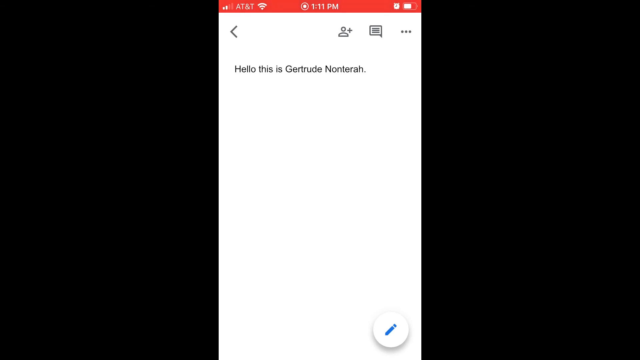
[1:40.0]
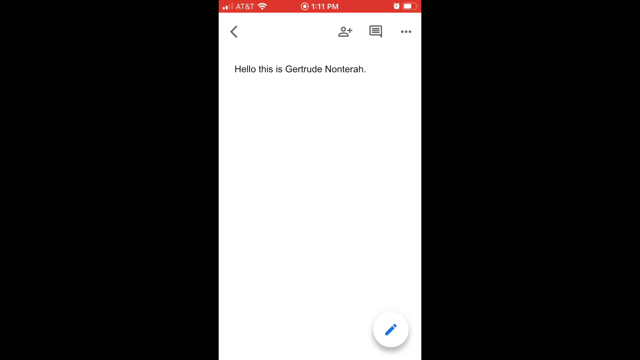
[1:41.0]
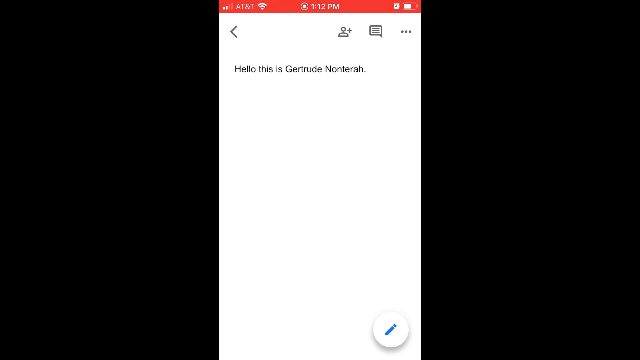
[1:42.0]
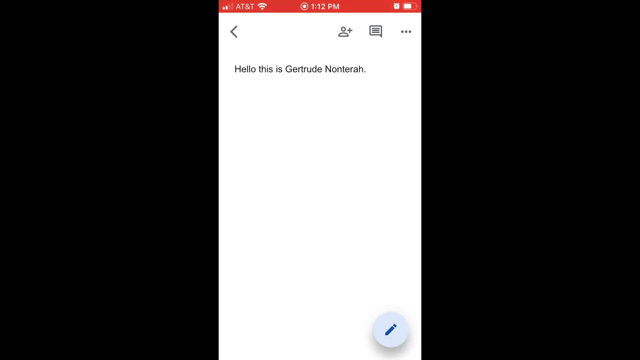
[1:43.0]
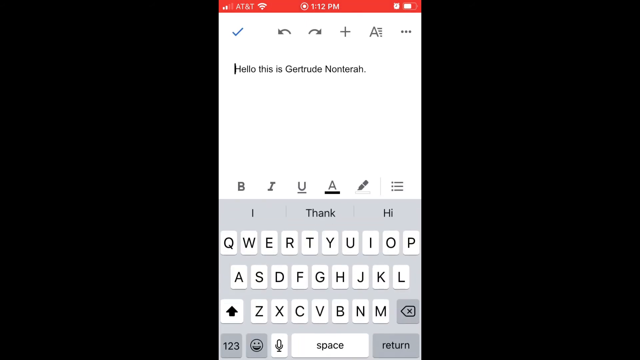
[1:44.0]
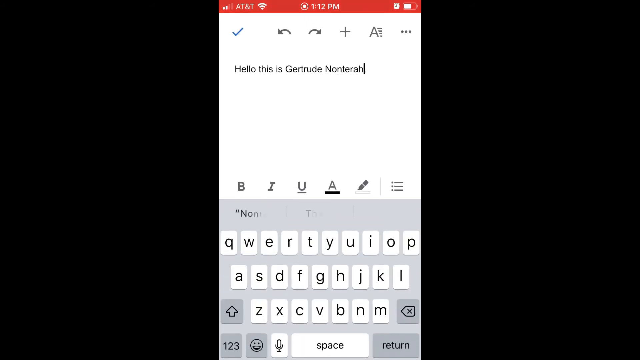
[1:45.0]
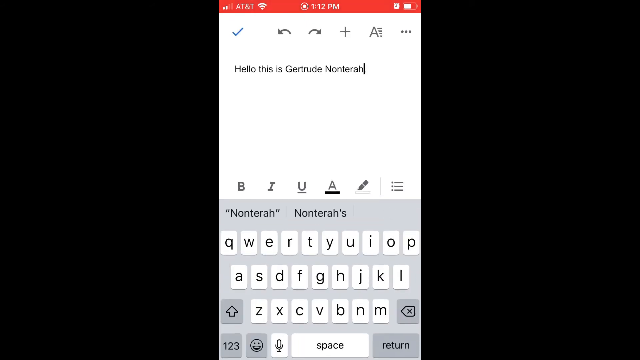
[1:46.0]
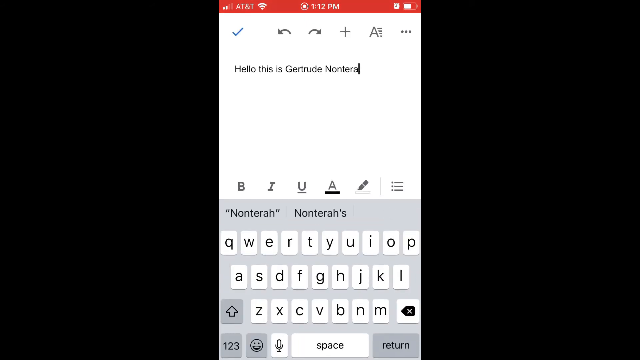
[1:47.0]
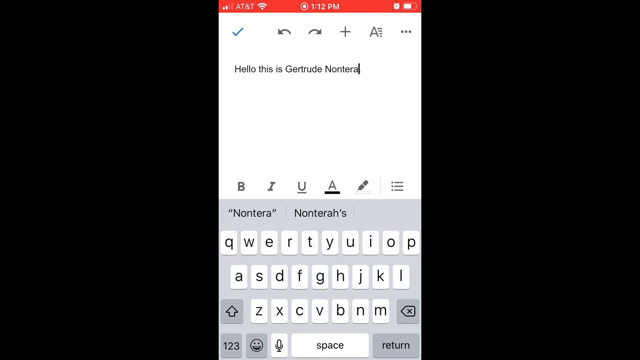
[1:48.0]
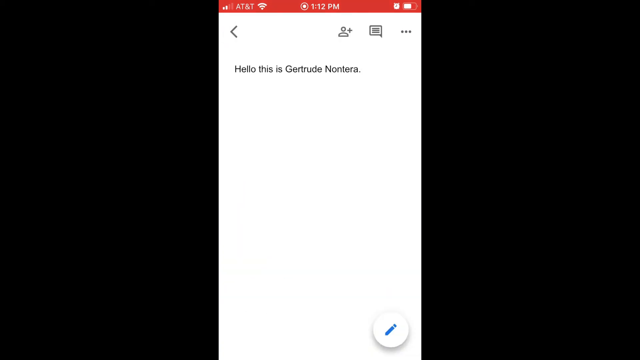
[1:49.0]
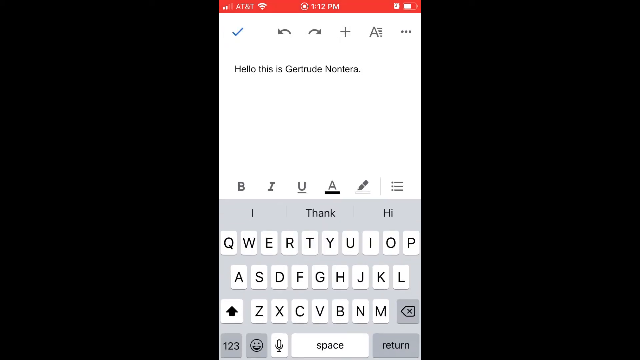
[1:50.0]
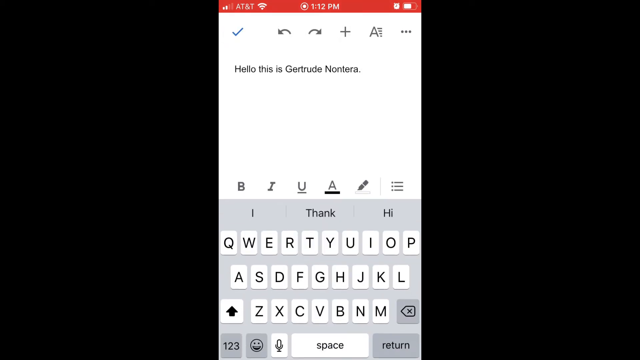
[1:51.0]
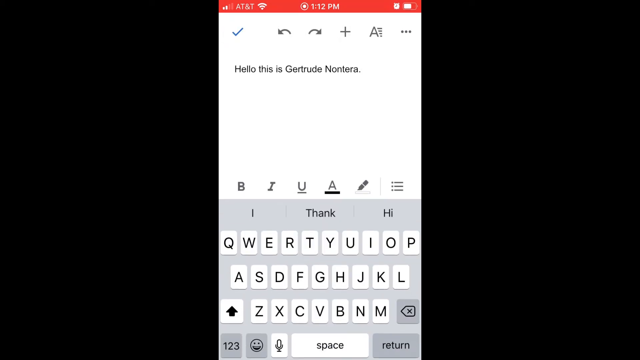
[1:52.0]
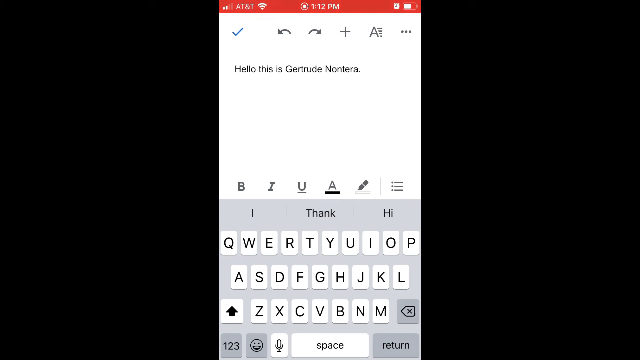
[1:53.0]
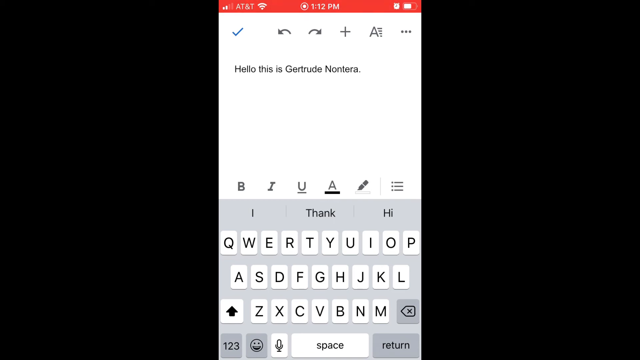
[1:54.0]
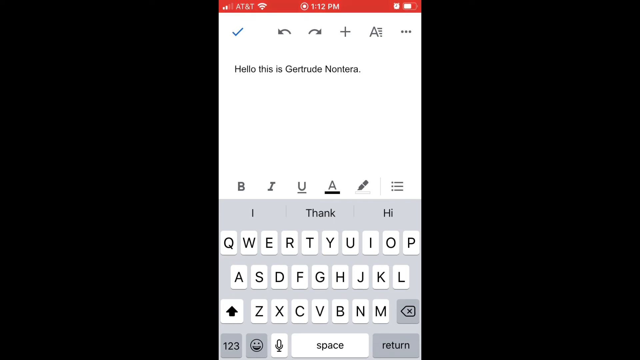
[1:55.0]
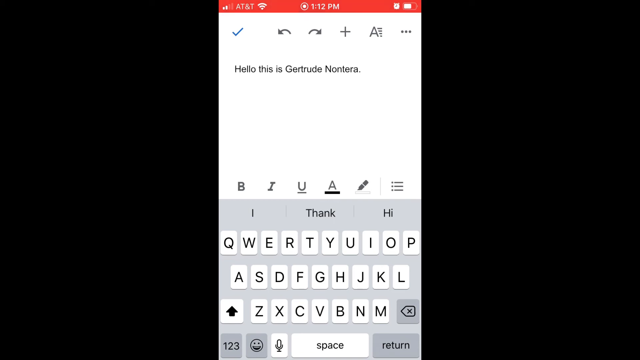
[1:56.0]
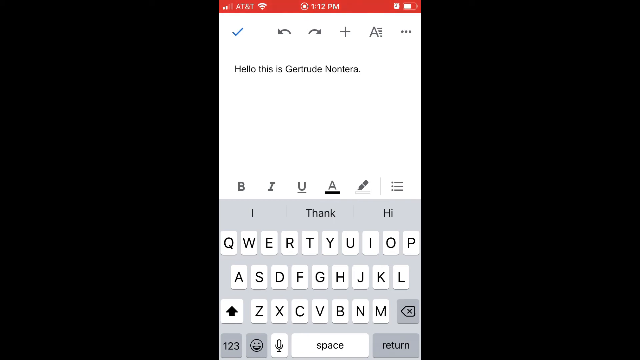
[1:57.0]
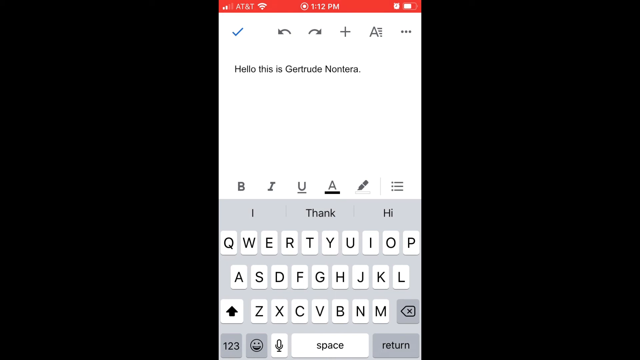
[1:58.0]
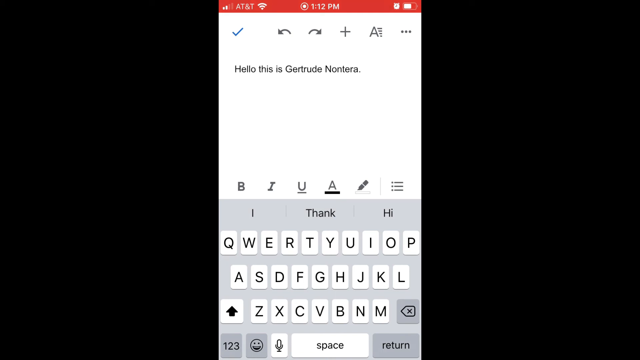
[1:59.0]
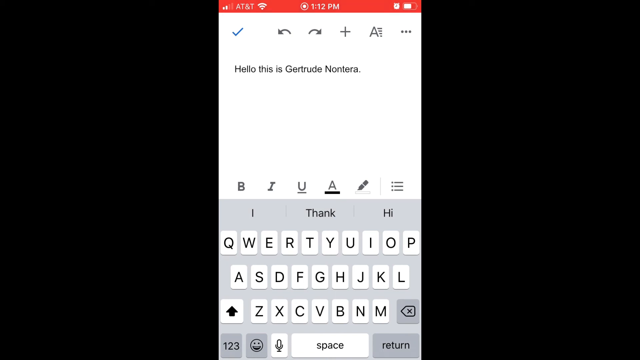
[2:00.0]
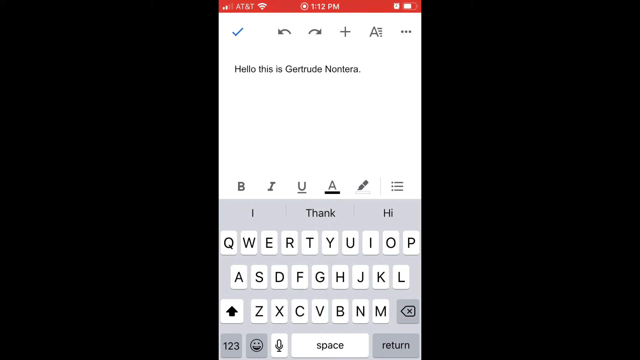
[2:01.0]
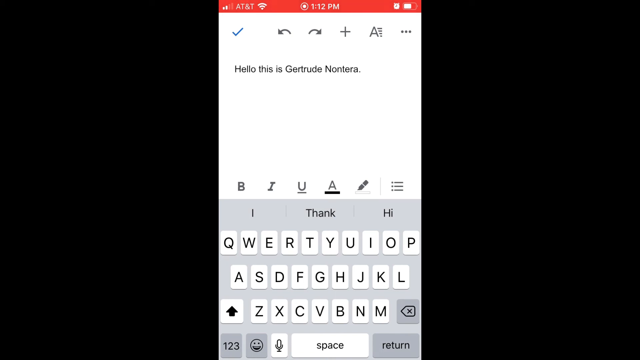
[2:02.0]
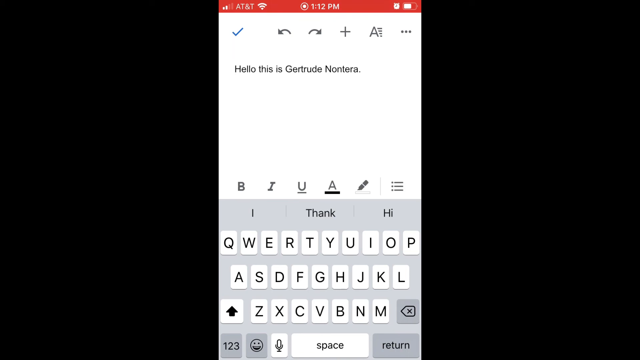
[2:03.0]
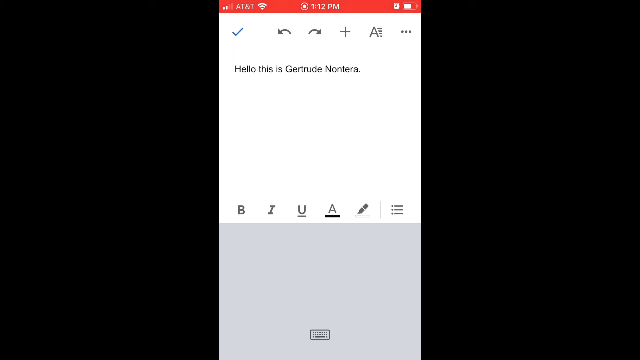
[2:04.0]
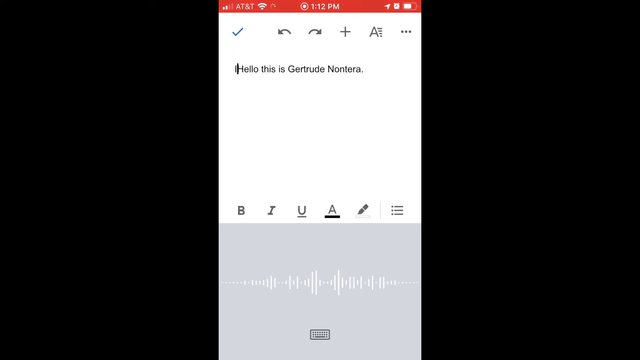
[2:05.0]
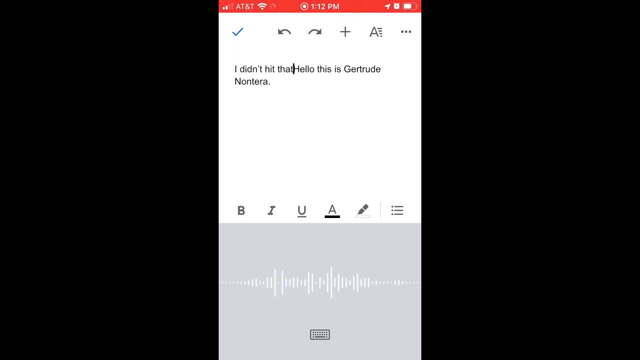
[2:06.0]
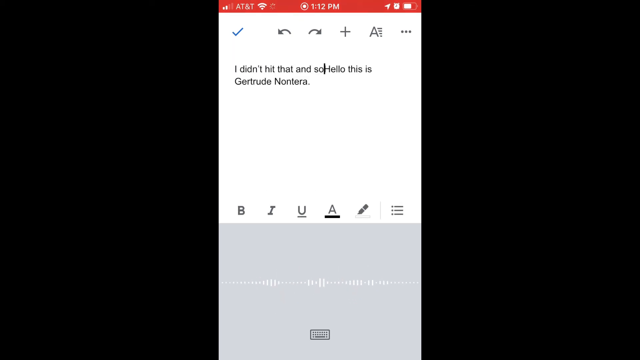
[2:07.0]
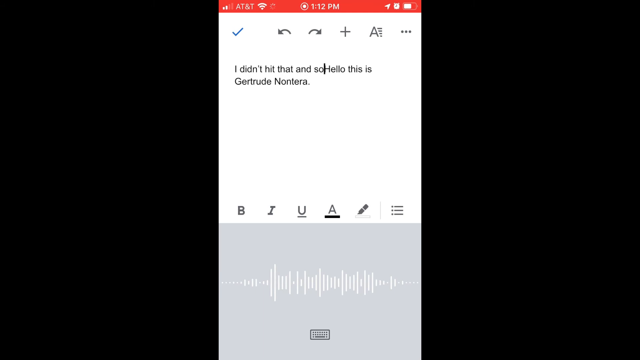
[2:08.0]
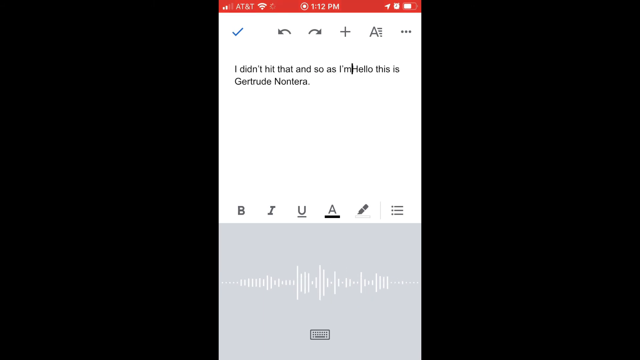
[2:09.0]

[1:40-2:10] In the Google Docs app on the phone, the person presses backspace at the end of the sentence, apparently getting rid of an H from a misspelled name while keeping the period. They then tap at the very beginning of the sentence, before "Hello". Nothing else happens until they tap what appears to be the microphone at the bottom left of the keyboard. As they speak, a sort of sound wave effect appears at the bottom, and text appears in the document reading "I didn't hit that, and so I'm speaking".